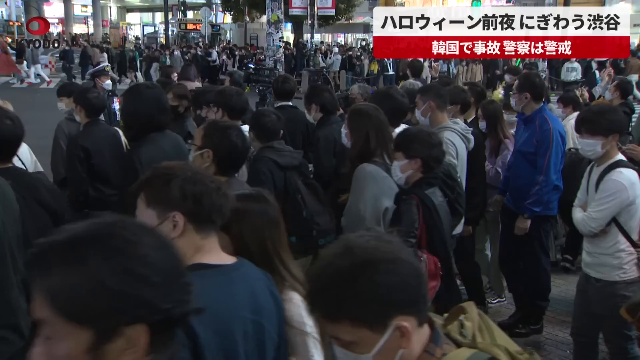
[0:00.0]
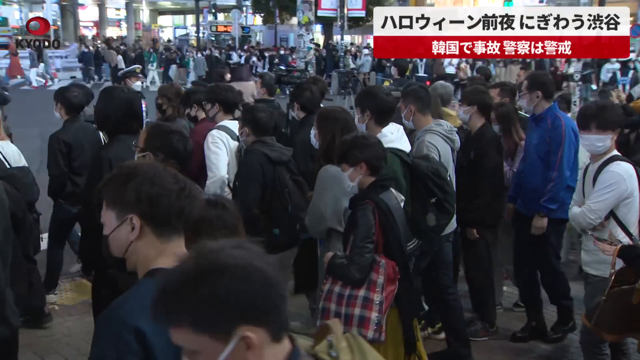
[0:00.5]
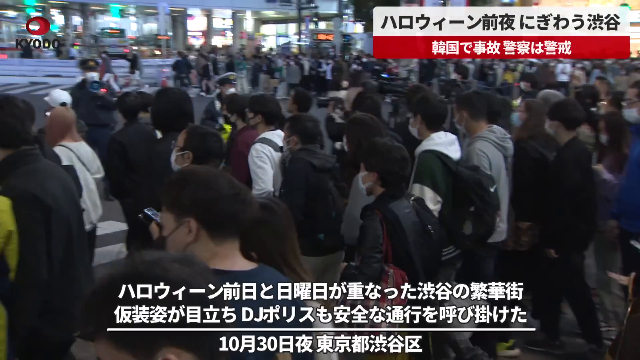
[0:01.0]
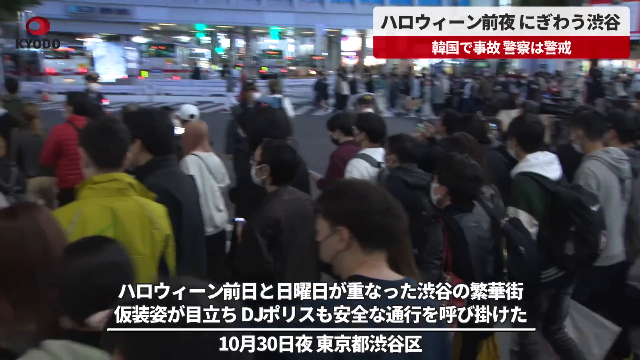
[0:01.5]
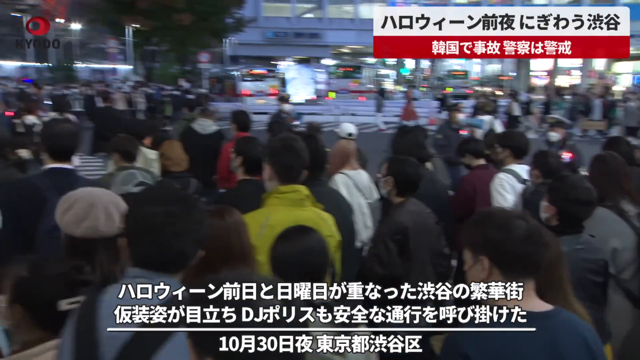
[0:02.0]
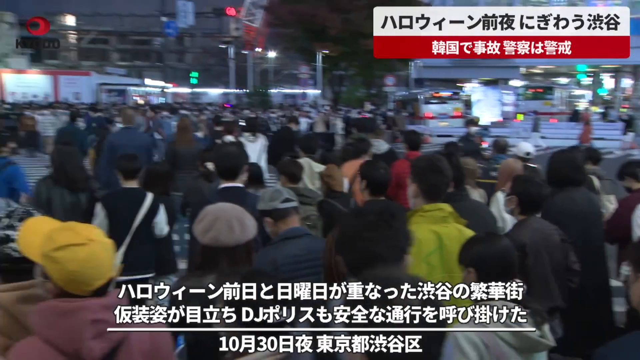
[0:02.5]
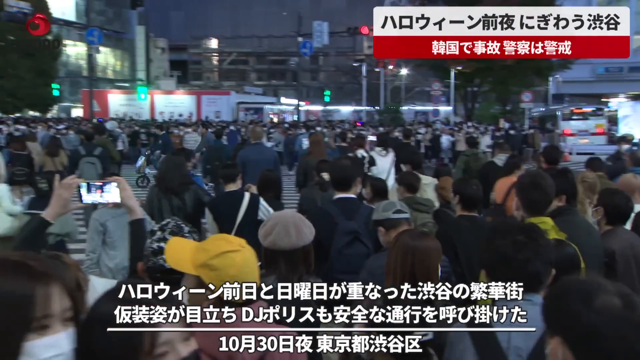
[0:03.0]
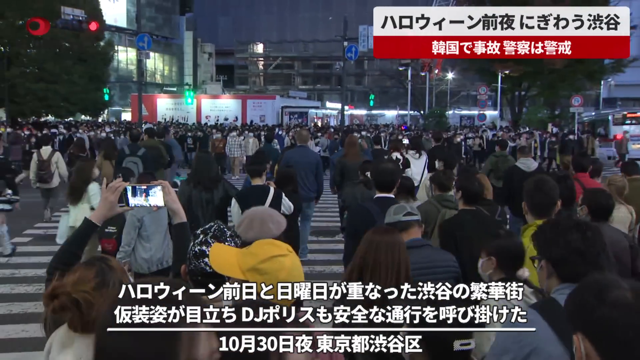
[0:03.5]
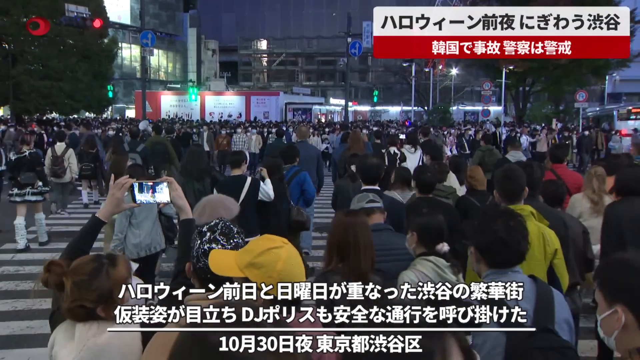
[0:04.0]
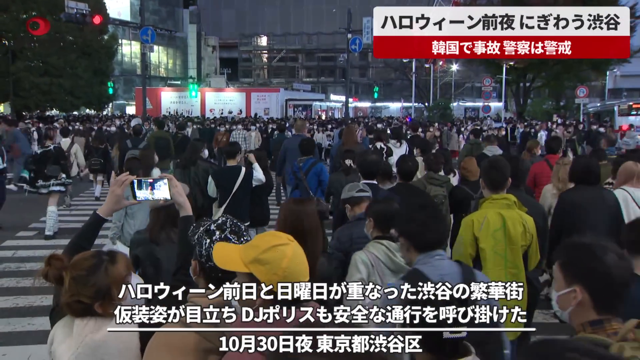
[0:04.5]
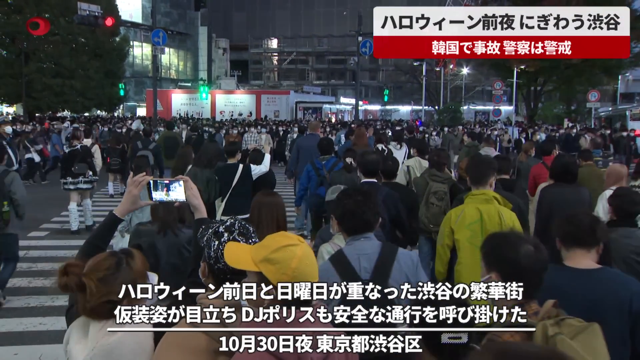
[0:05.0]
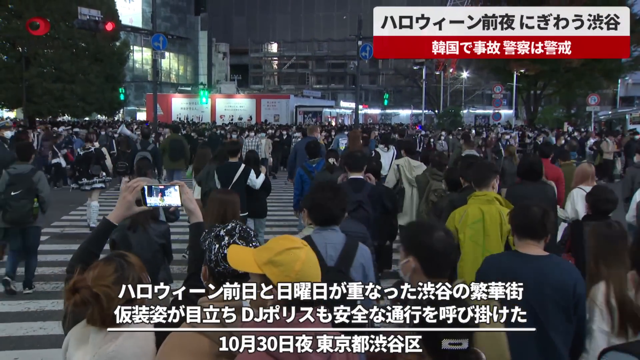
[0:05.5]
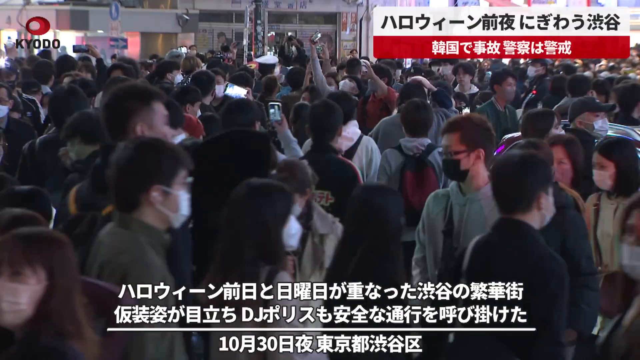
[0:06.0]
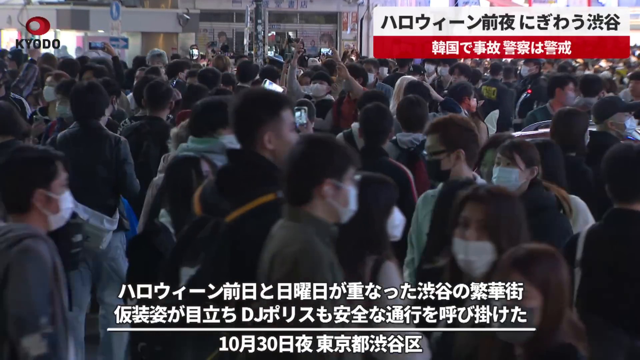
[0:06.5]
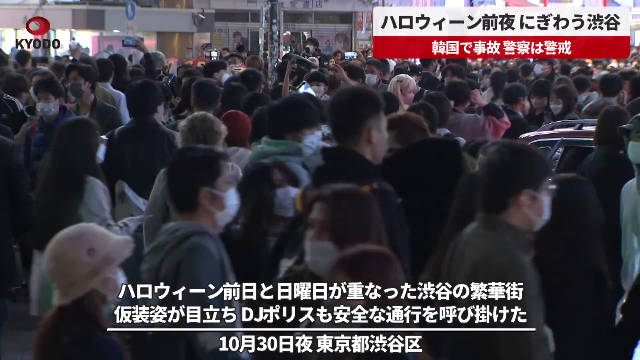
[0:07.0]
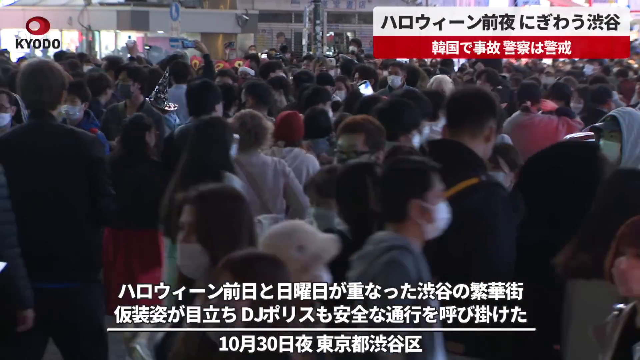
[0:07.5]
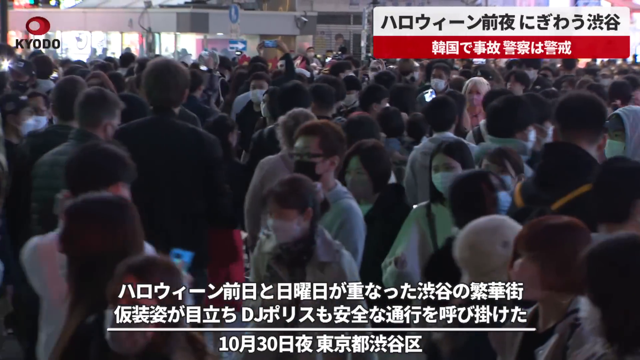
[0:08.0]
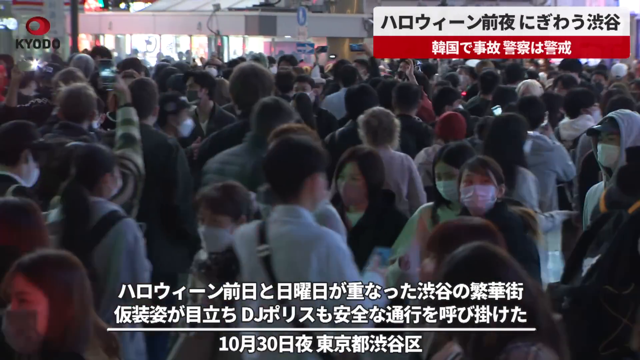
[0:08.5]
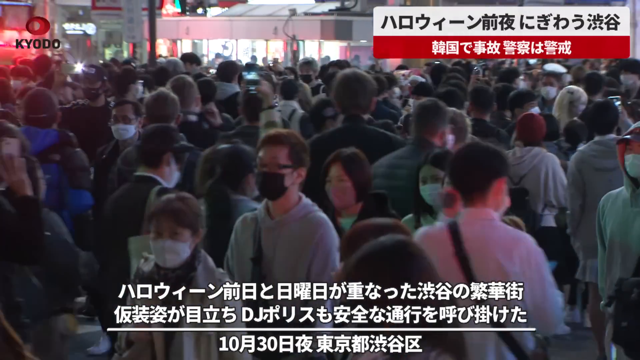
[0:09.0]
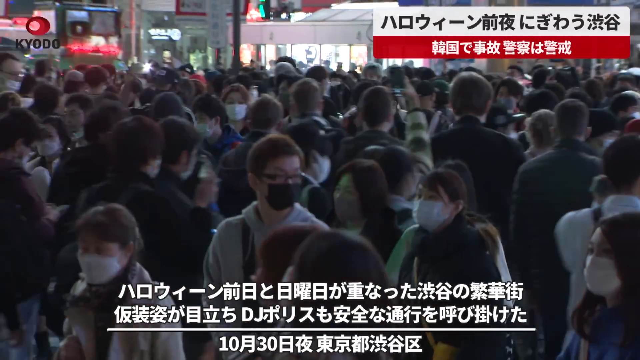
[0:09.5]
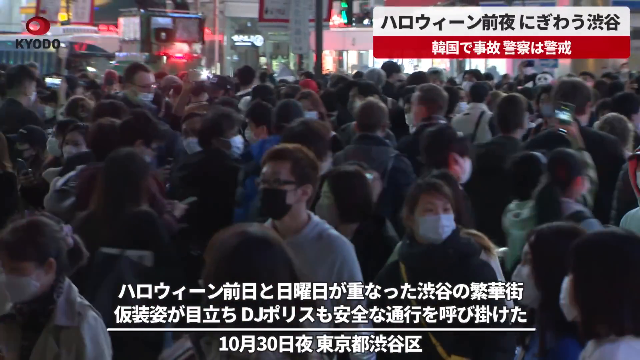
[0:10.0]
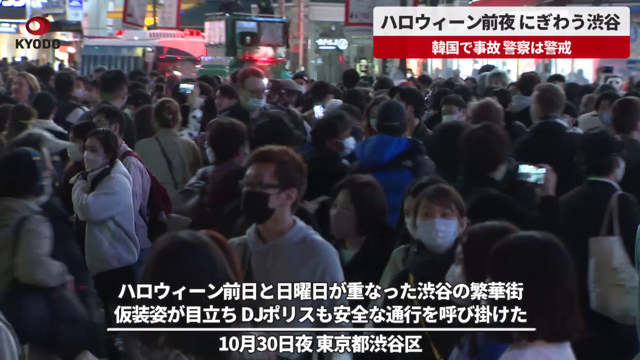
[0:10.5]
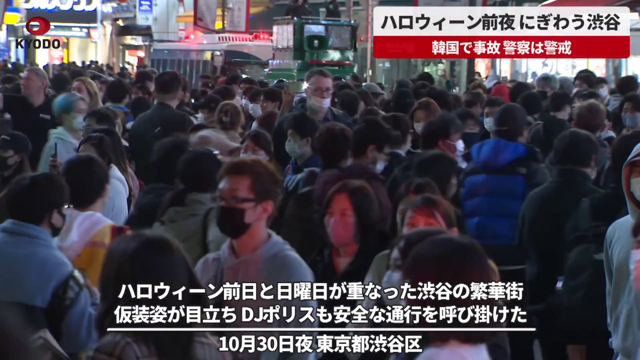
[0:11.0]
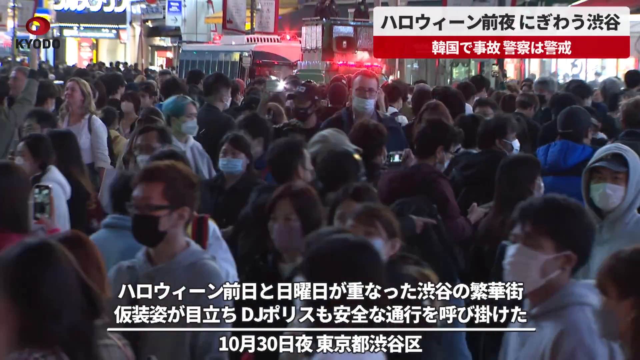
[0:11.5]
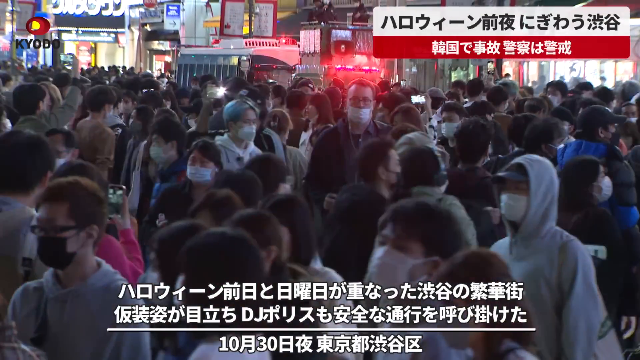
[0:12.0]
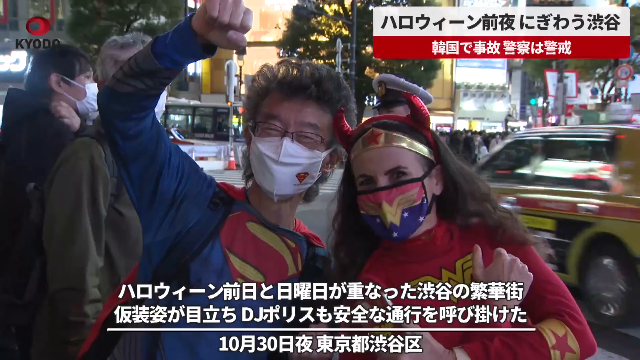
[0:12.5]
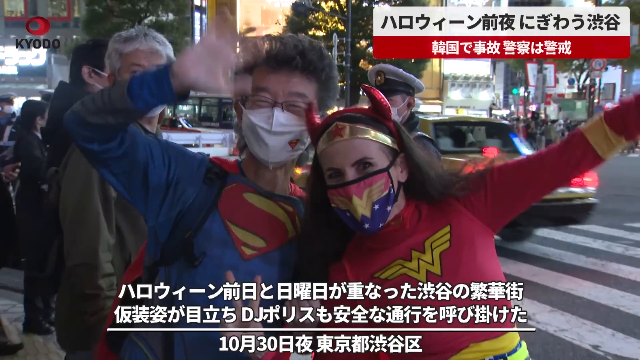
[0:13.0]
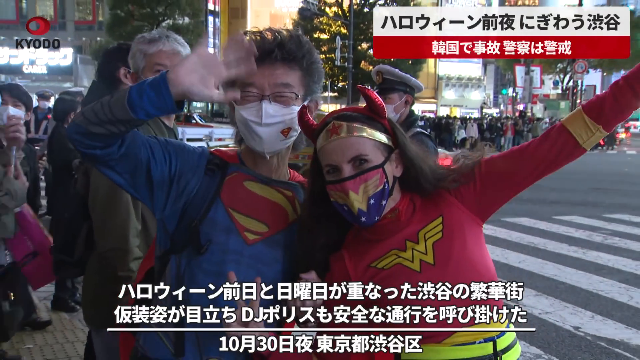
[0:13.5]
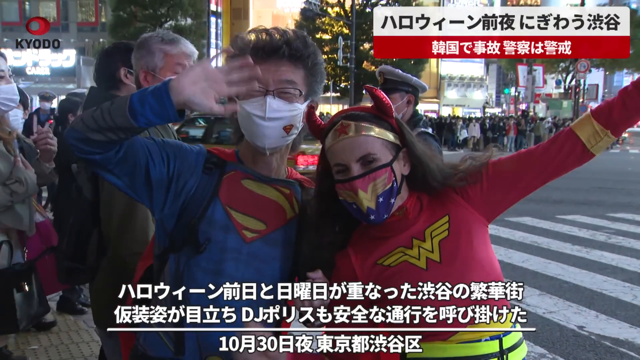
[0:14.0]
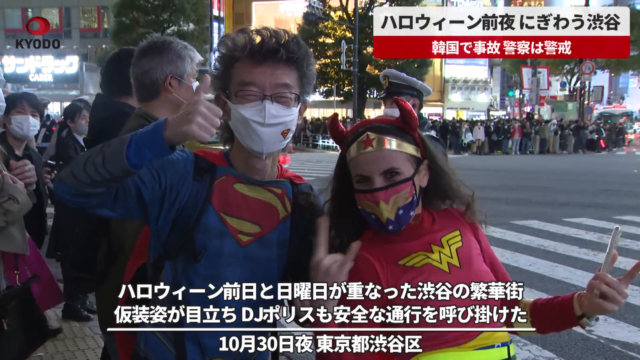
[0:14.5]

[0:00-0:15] This appears to be a news report from a Japanese news station showing some type of busy street scene. A large city street is full of people who look to be of Japanese descent, walking about; some of them look up and take selfies. Two people dressed in costumes appear. There looks to be an older Japanese man wearing a Superman shirt, with a white mask and glasses on his face, and he is waving. Next to him is a Caucasian woman with brown shoulder-length hair wearing a Wonder Woman costume along with red devil horns on her ears and around her head. She has a Wonder Woman mask covering the bottom half of her face and her arm up in the air. It seems to be some type of event where many people are walking around the street in Japan.